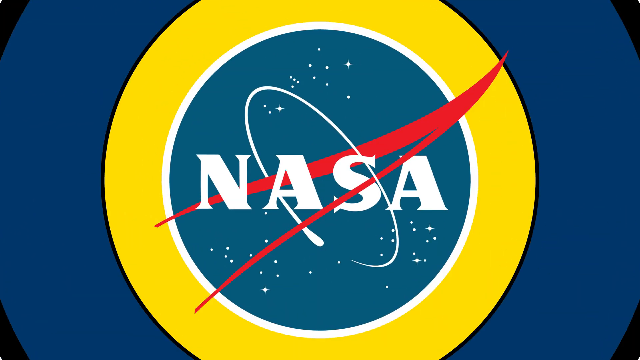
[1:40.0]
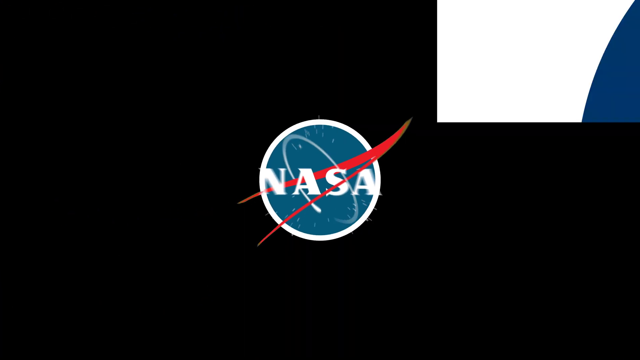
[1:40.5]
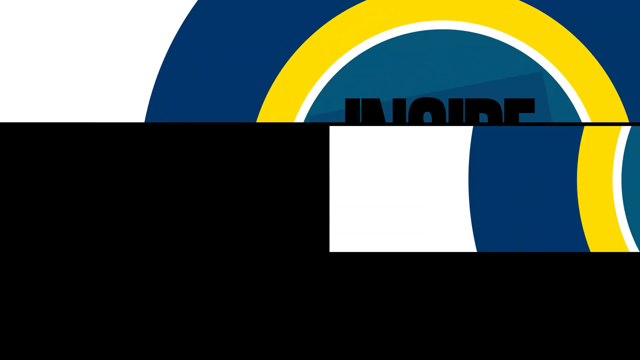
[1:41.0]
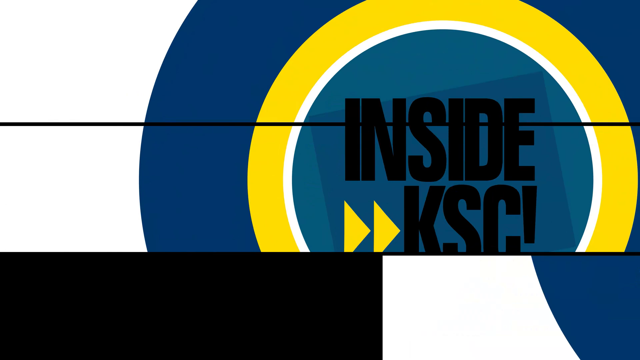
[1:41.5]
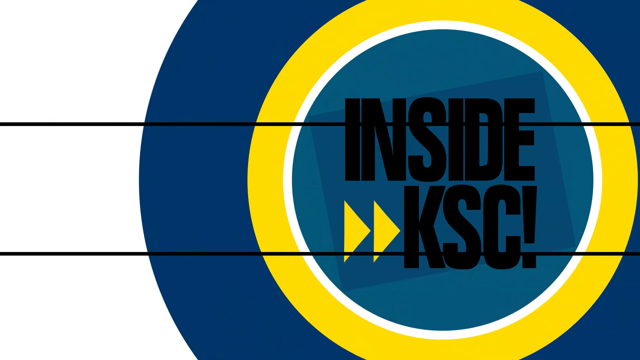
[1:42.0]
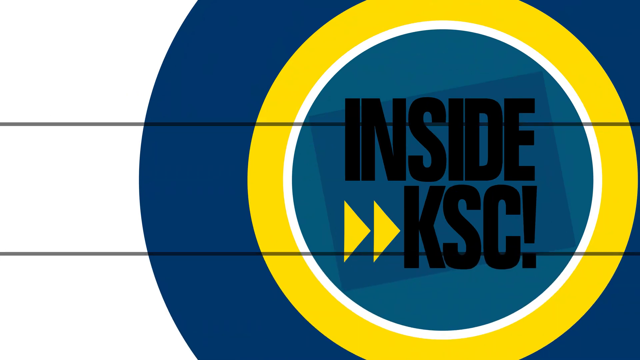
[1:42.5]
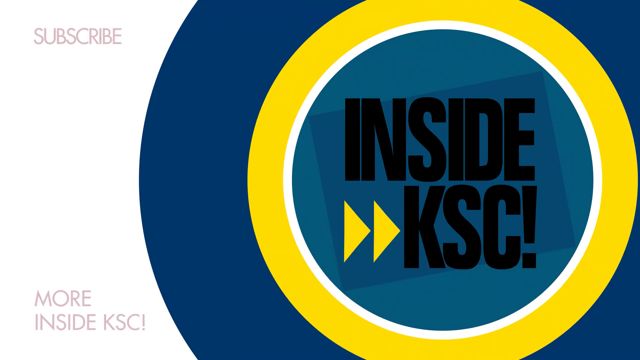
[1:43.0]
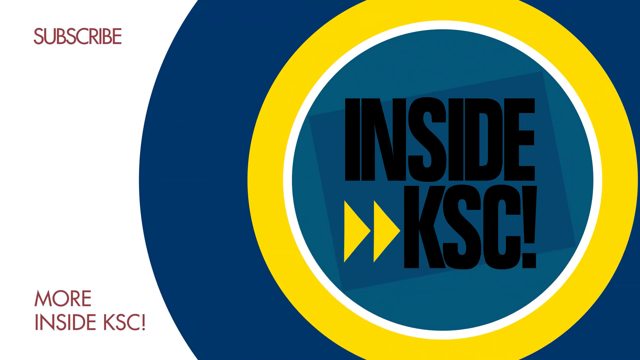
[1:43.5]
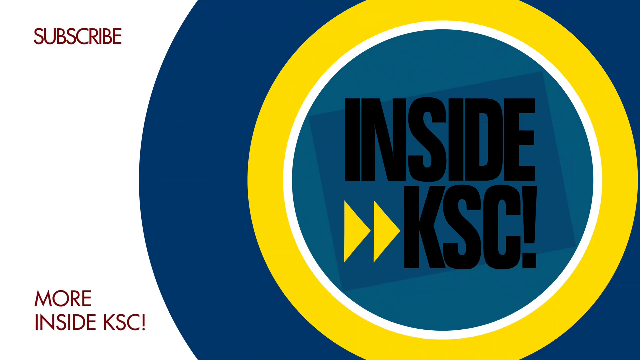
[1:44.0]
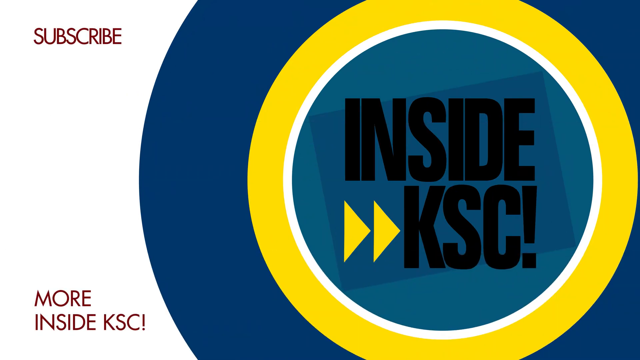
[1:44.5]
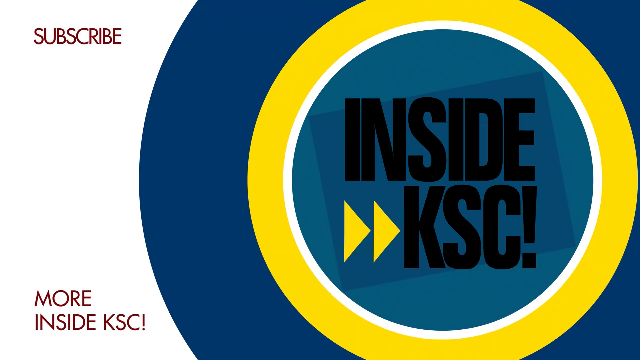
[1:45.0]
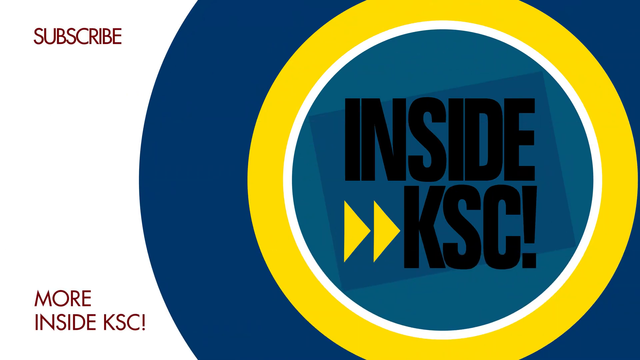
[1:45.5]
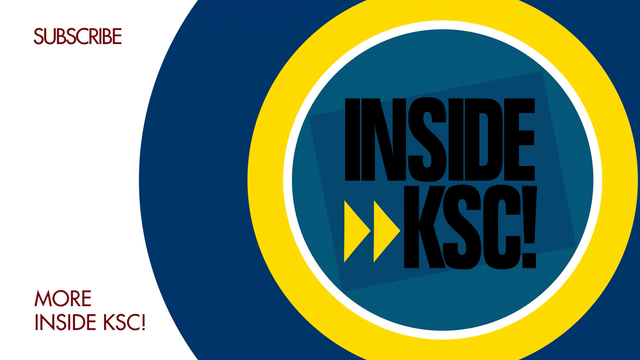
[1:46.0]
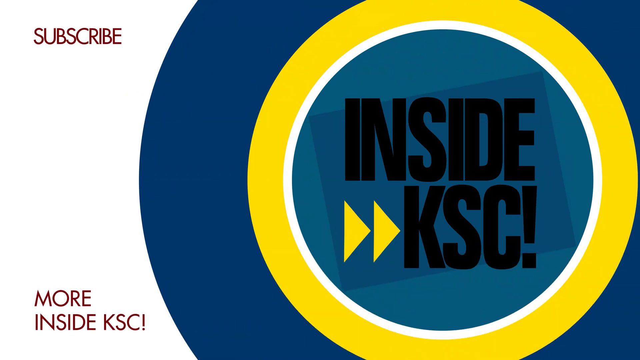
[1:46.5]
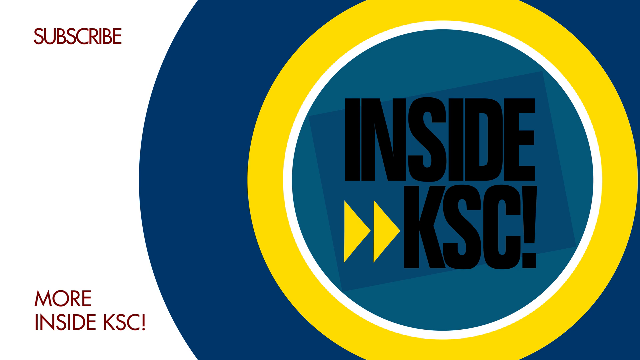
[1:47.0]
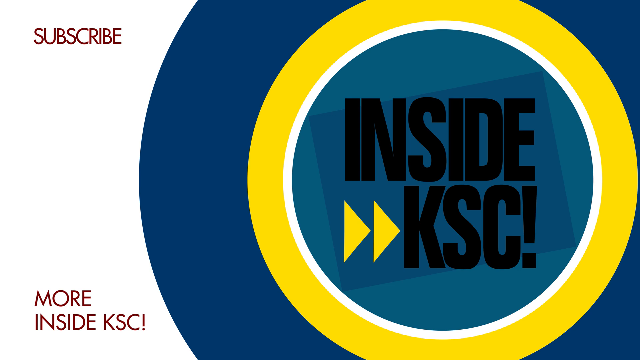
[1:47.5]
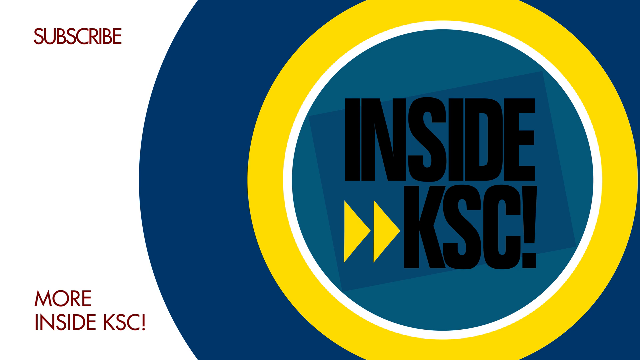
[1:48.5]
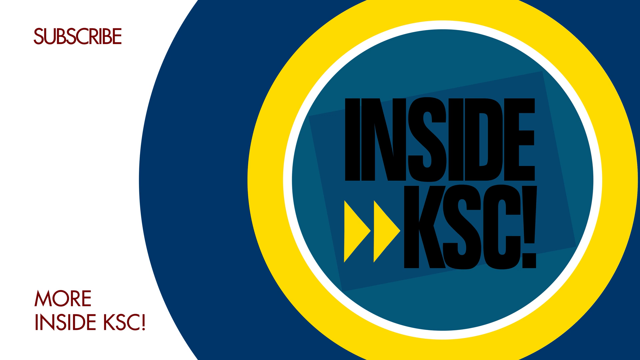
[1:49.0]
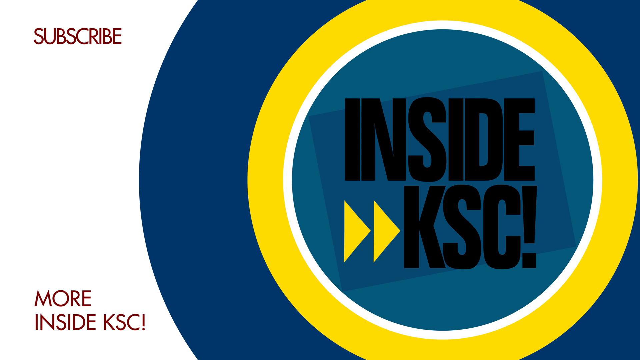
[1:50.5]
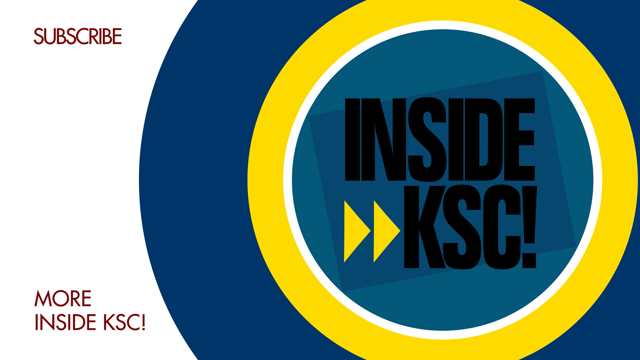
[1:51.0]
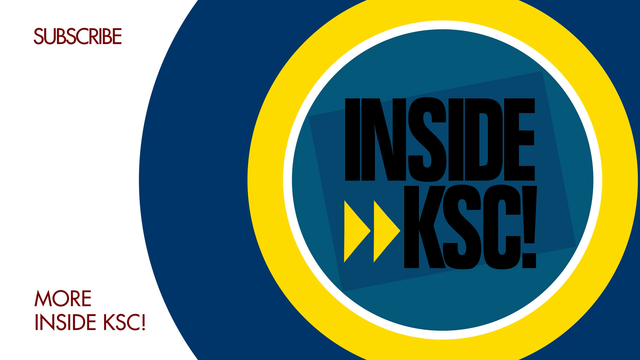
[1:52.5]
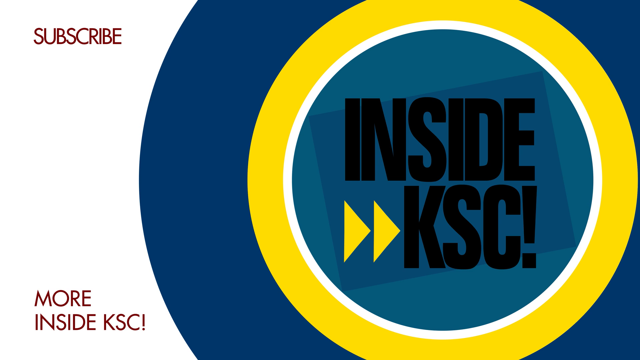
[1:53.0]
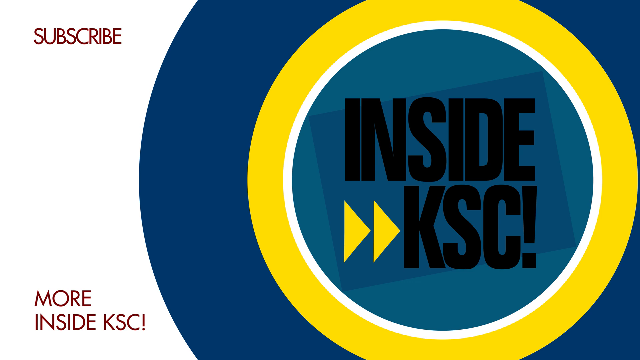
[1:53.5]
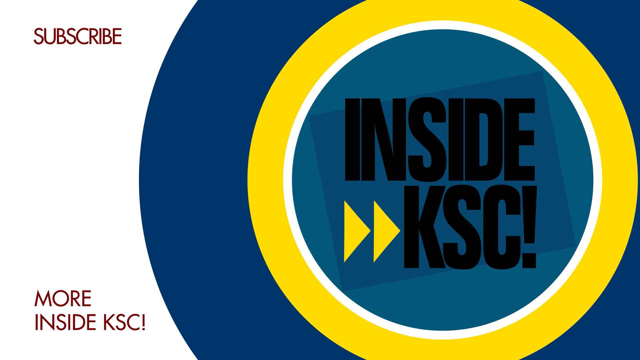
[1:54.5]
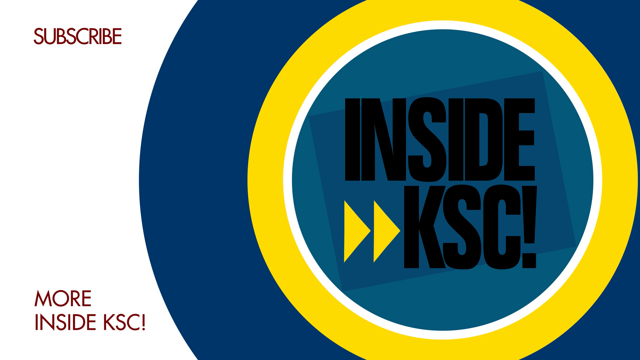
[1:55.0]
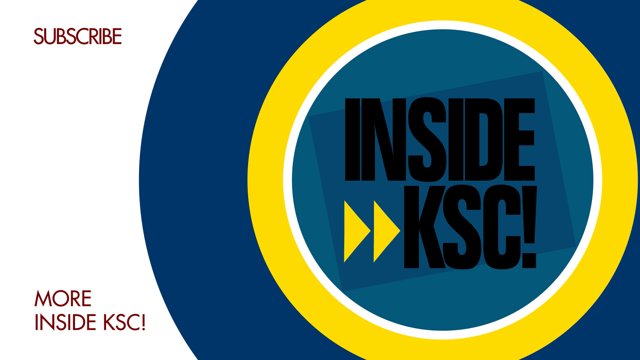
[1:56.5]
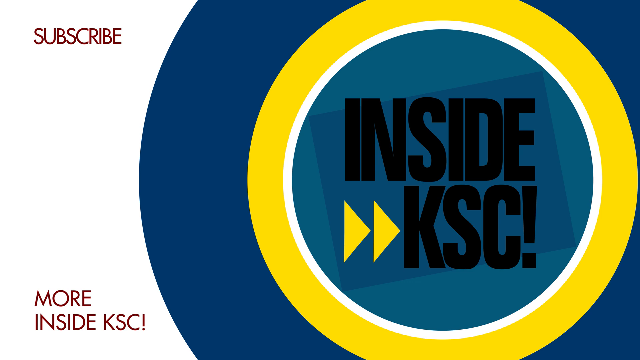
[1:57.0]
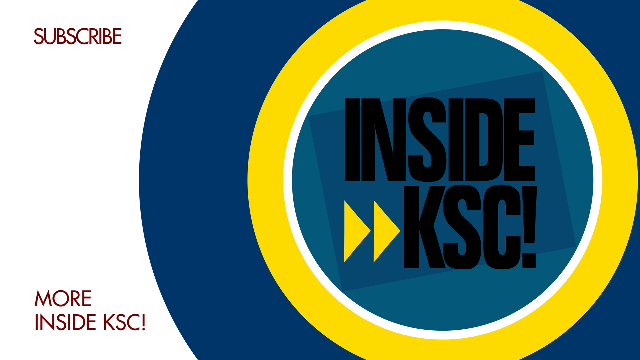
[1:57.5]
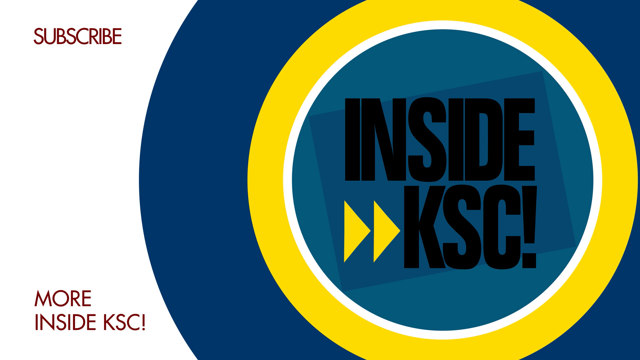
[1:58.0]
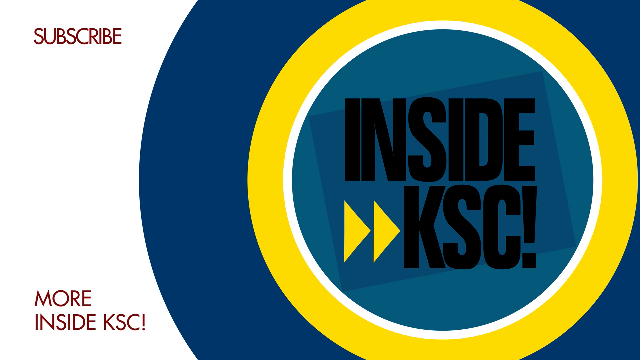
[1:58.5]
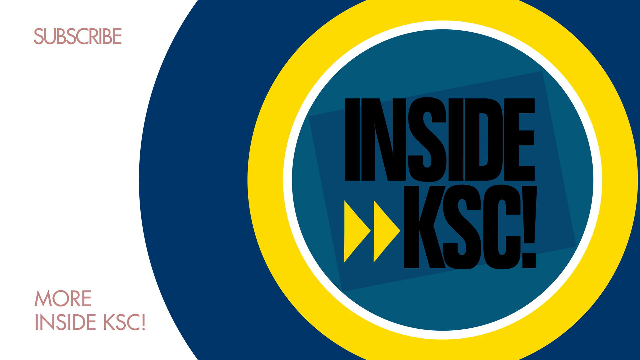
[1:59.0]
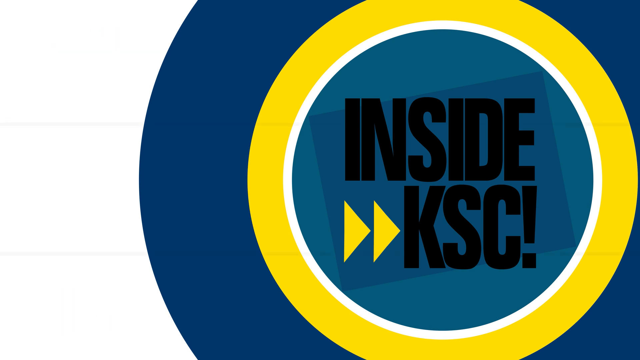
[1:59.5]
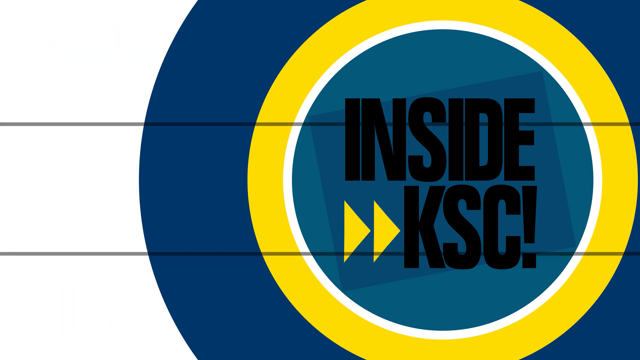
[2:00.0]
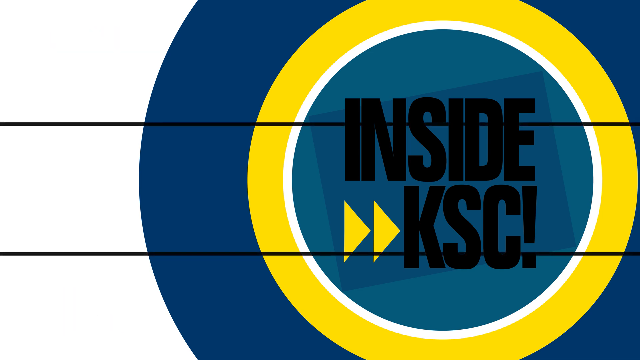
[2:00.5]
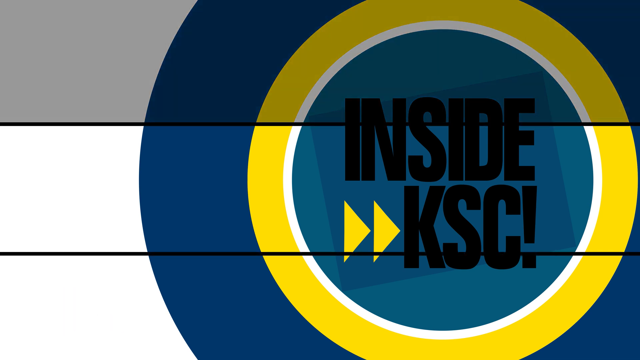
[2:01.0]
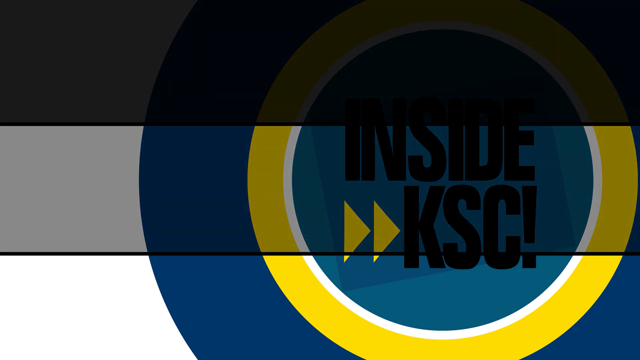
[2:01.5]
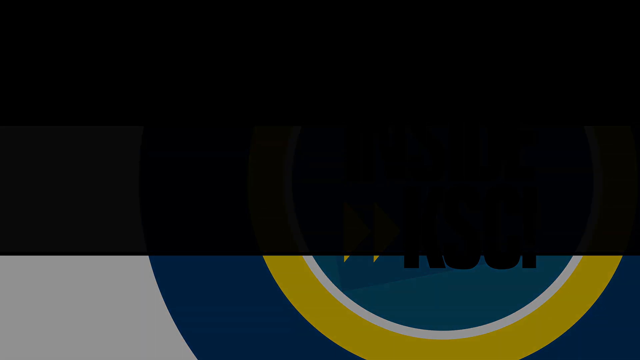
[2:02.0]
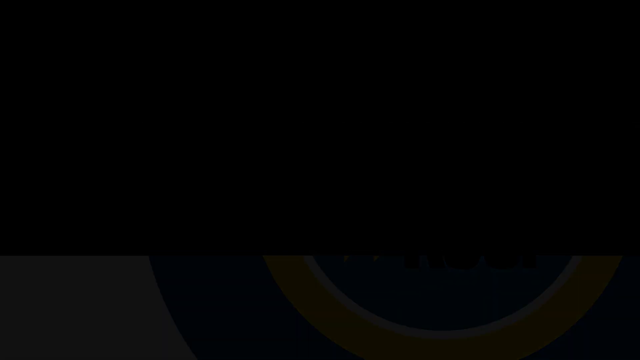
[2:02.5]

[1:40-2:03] The NASA logo is shown, surrounded by a large blue circle and an inner yellow circle, with the logo in the center of the yellow circle. The logo quickly fades toward the center, transitioning to a new screen with the same larger blue circle and inner yellow circle, but instead of the NASA logo, the inside reads "Inside KSC". Text appears in the top left corner reading "Subscribe", and in the bottom left corner reading "More Inside KSC". The screen remains unmoving for a good 10-plus seconds. Lines then appear, segmenting the entire screen into three from top to bottom. The top third fades to black, then the middle portion, and finally the bottom portion, leaving a solid black screen.